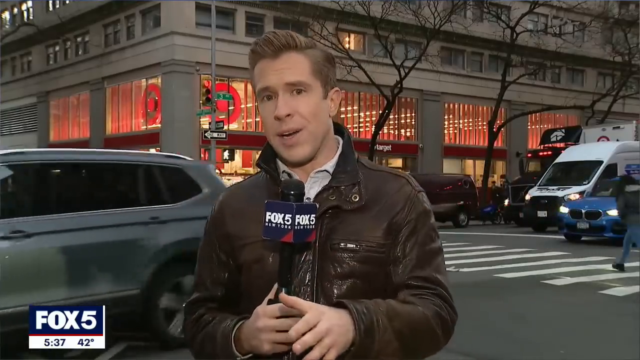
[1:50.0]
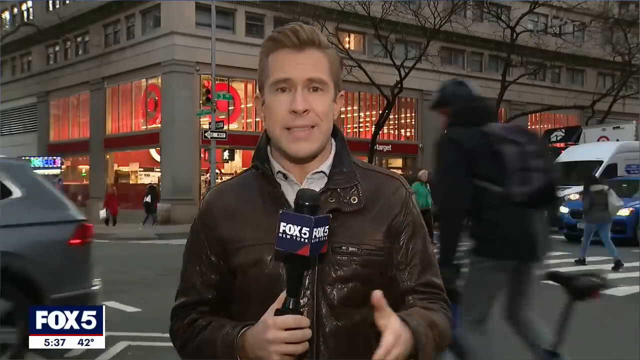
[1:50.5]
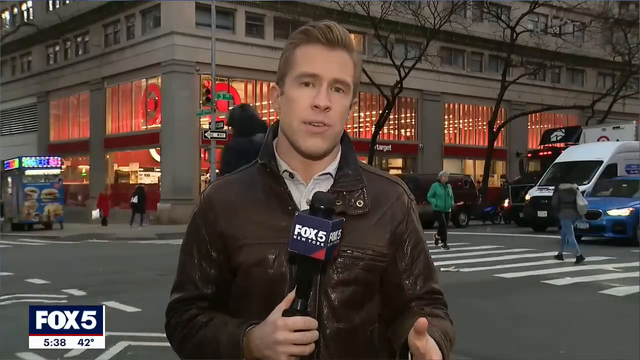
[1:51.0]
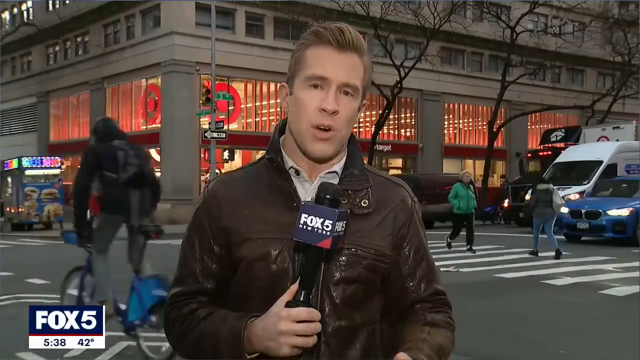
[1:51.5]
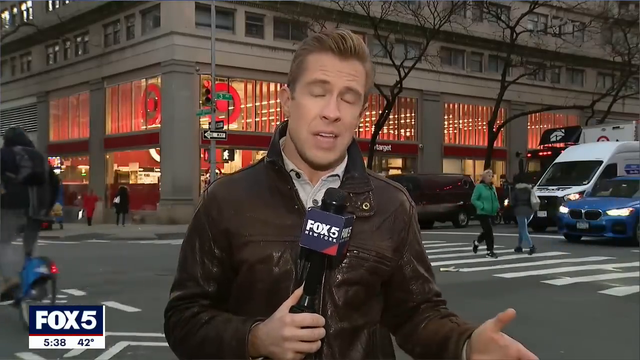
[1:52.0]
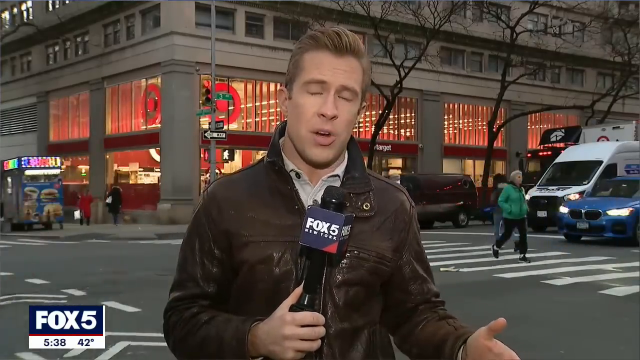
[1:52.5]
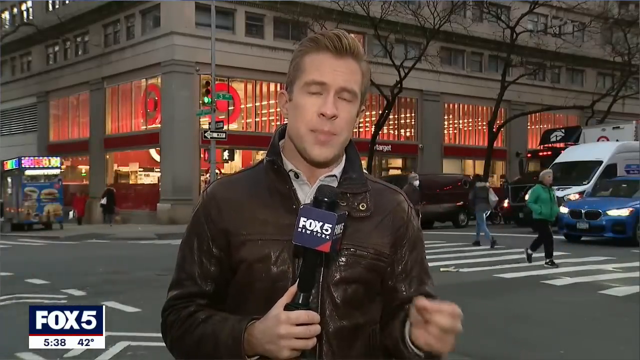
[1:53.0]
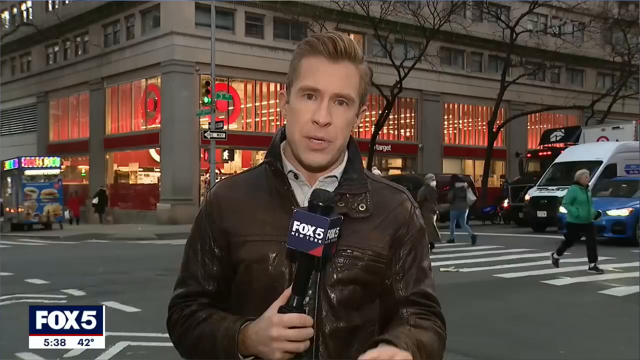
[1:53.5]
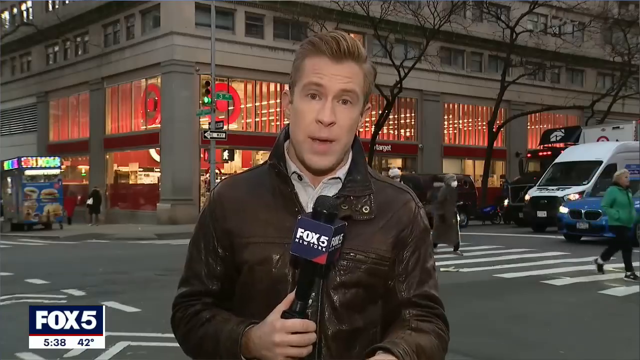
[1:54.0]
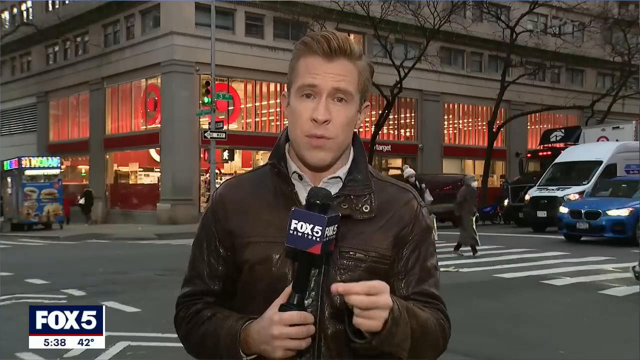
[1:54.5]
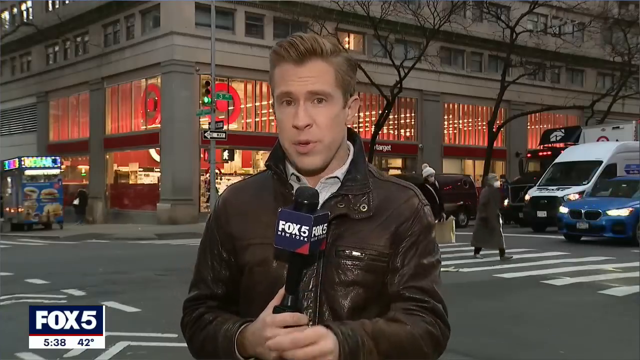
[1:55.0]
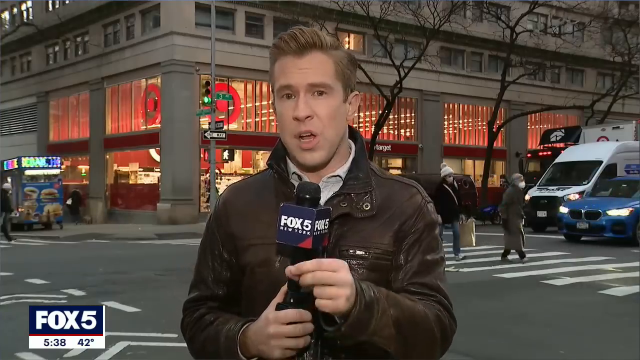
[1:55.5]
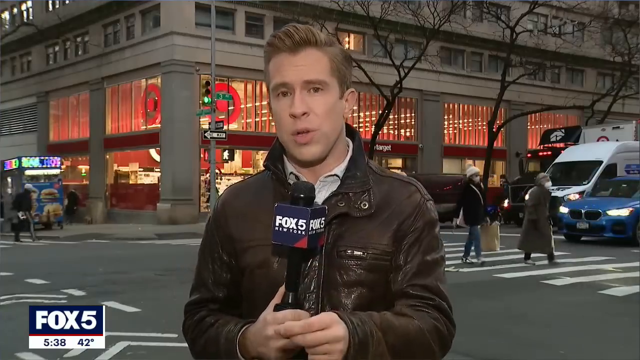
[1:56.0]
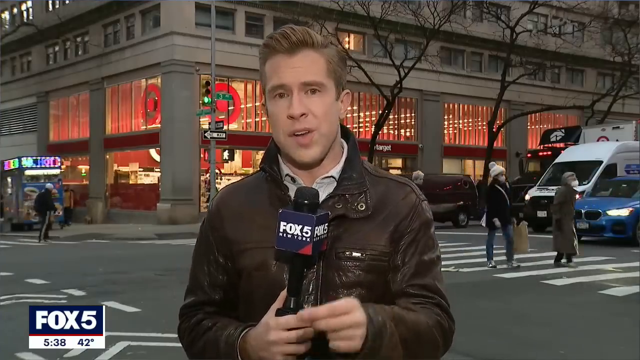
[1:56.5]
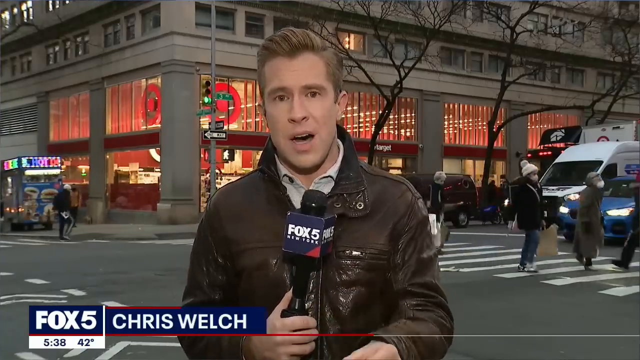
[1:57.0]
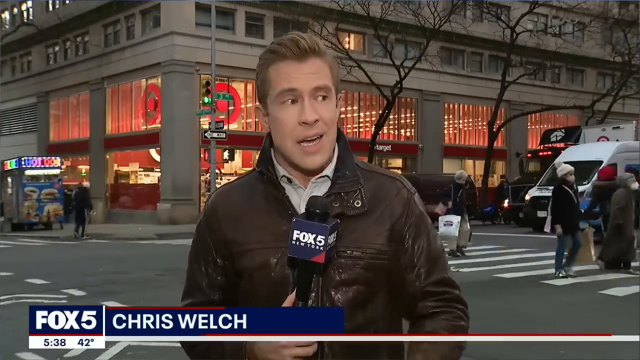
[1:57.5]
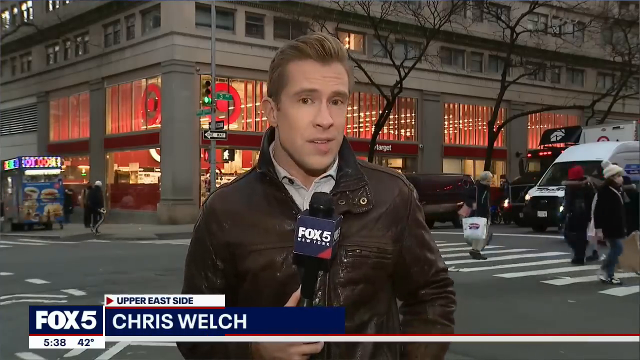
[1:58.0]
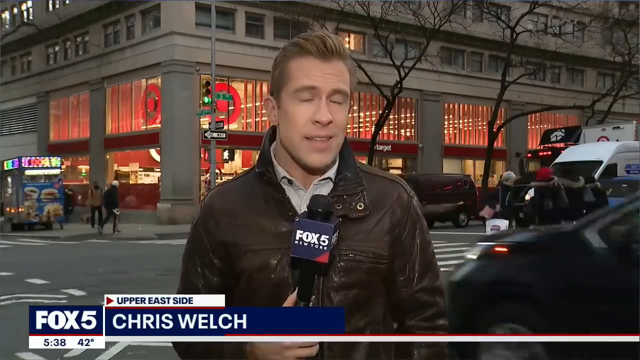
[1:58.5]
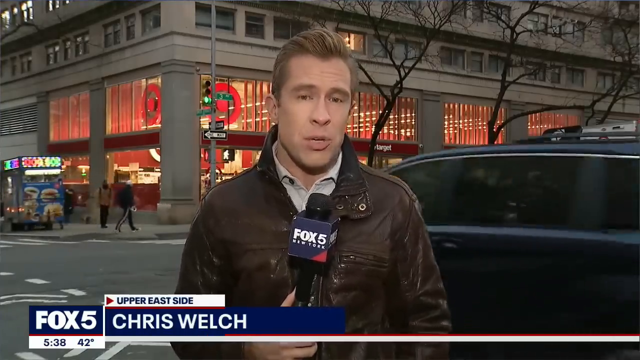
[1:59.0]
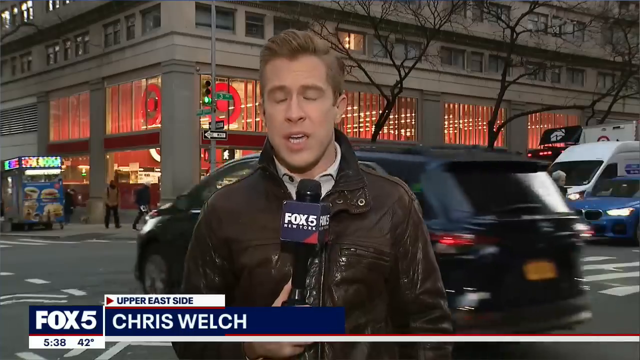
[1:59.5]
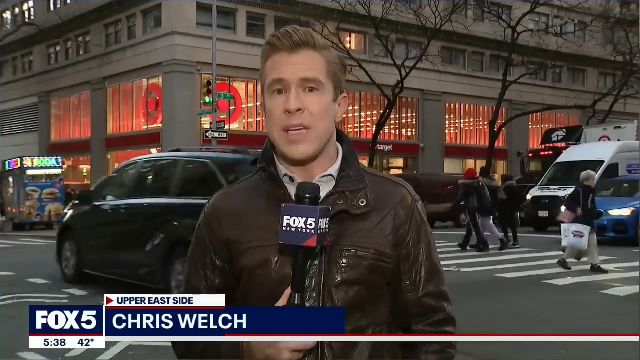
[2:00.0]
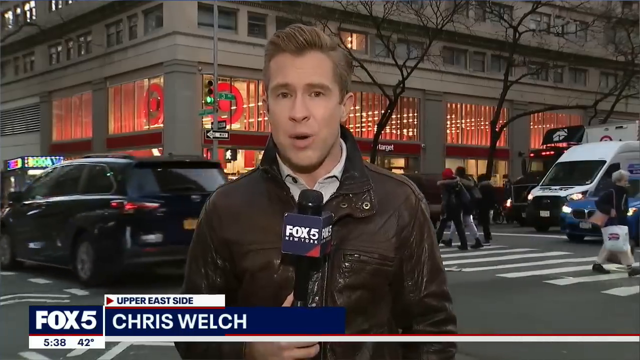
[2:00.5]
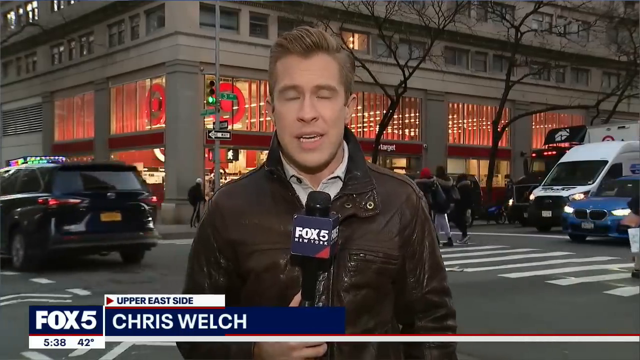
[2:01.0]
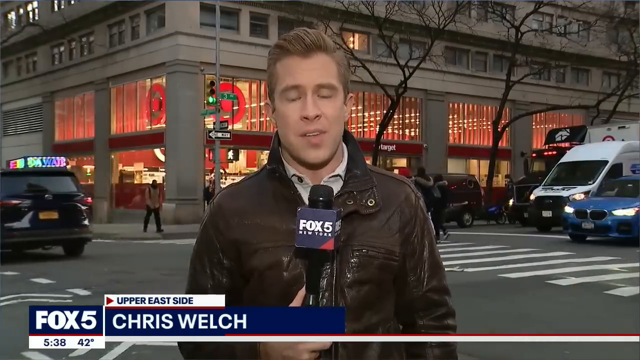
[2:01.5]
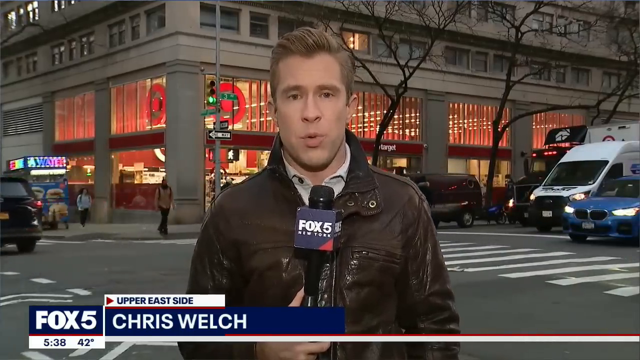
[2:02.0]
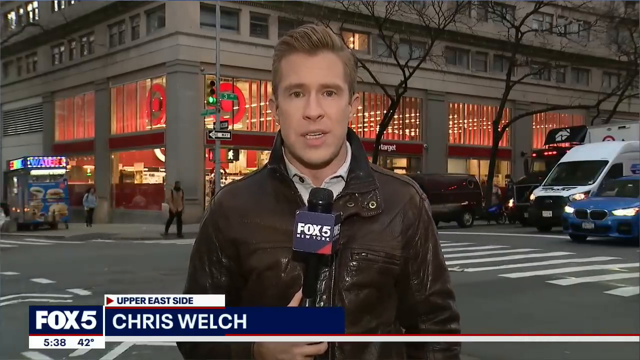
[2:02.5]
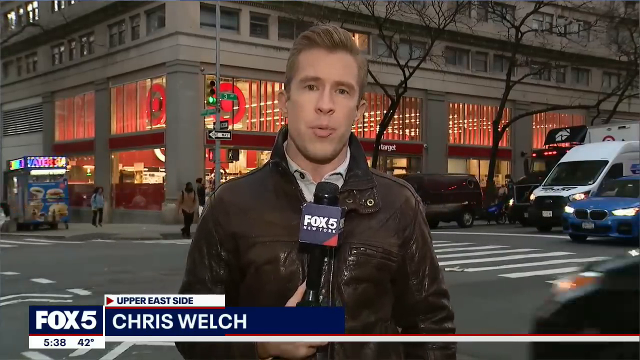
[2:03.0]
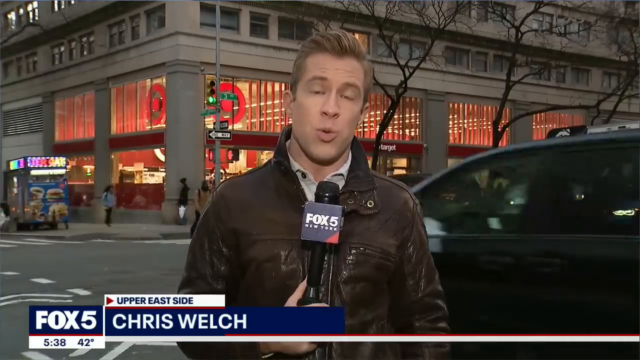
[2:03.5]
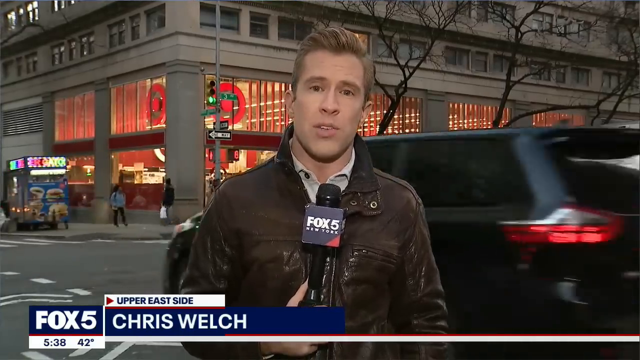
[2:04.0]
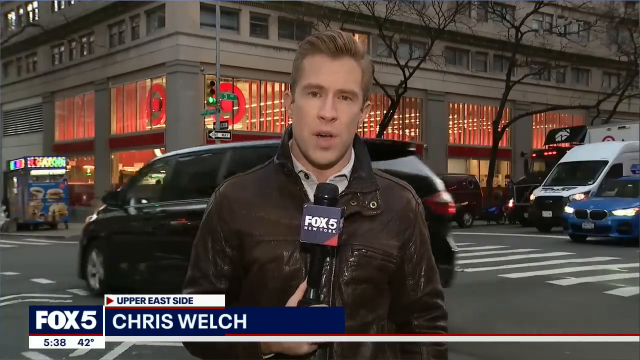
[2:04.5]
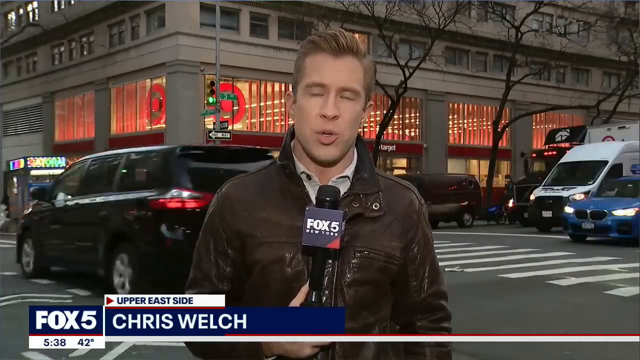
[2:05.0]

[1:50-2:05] A man stands out on the street corner holding a News 5 microphone up to his mouth. He has white skin and brown hair parted to the side, and wears a brown leather jacket. In the background is the outside of a Target store with the Target logo, and behind him people walk across the crosswalk and cars drive by. The Fox 5 logo is in the bottom left part of the screen, and underneath it the time, 5:38, and the temperature, 42 degrees, are displayed. The man is Chris Welch, and the screen says "Upper East Side." After the man speaks into the camera for several more seconds, the video ends.